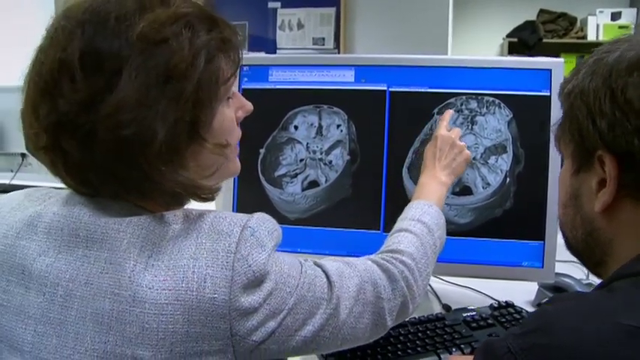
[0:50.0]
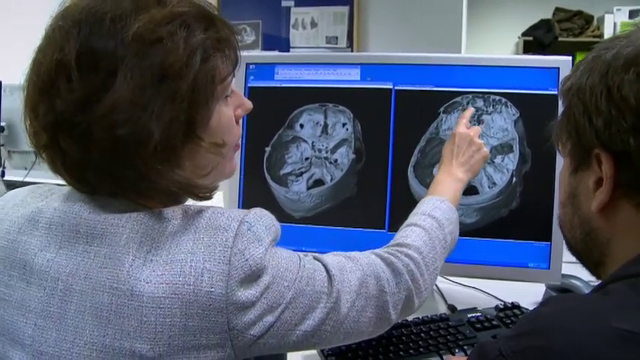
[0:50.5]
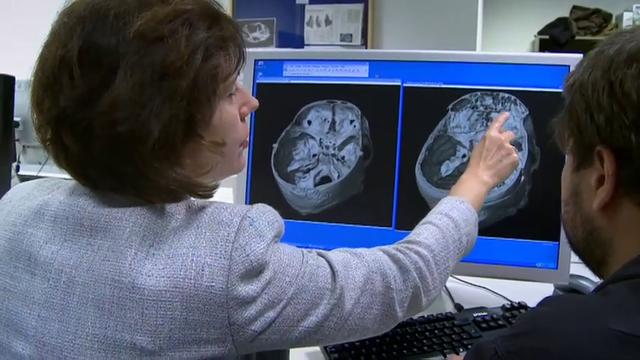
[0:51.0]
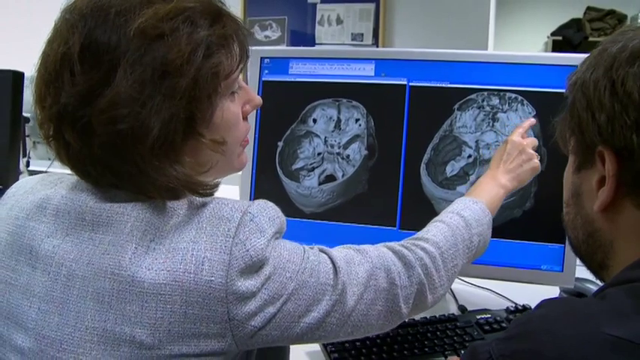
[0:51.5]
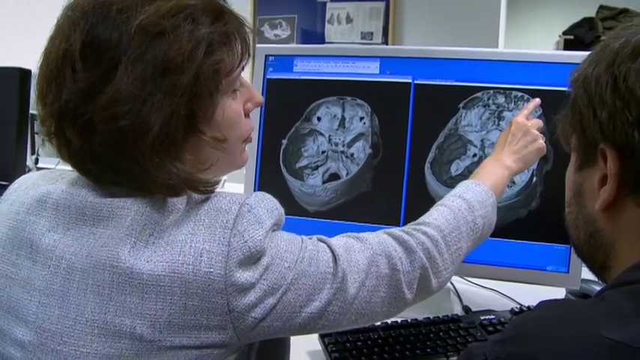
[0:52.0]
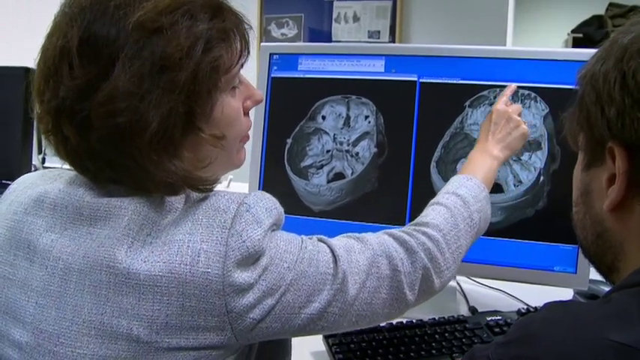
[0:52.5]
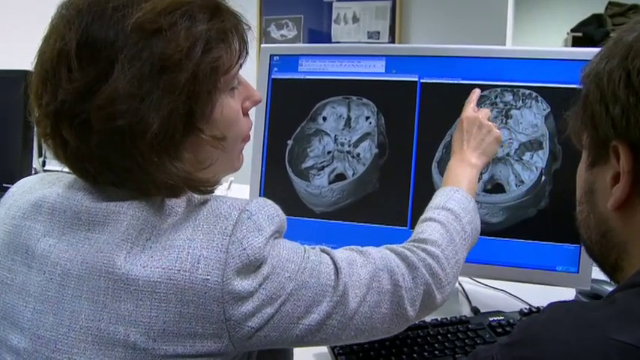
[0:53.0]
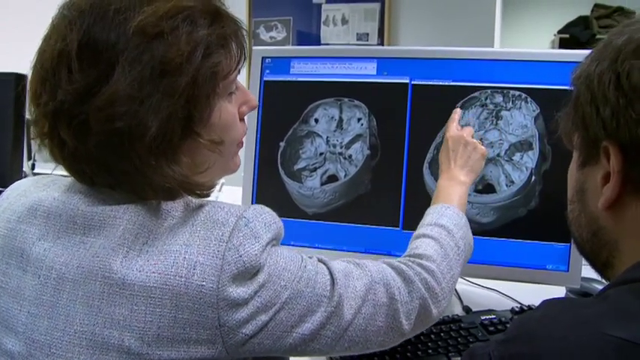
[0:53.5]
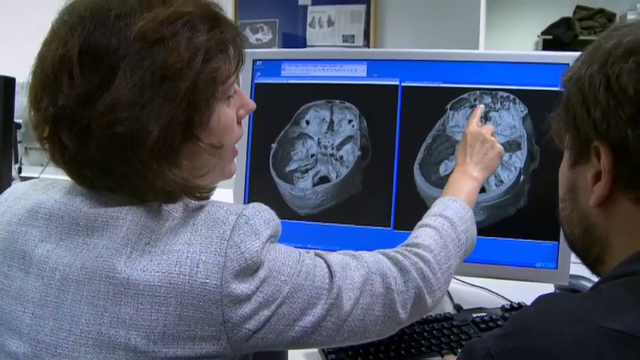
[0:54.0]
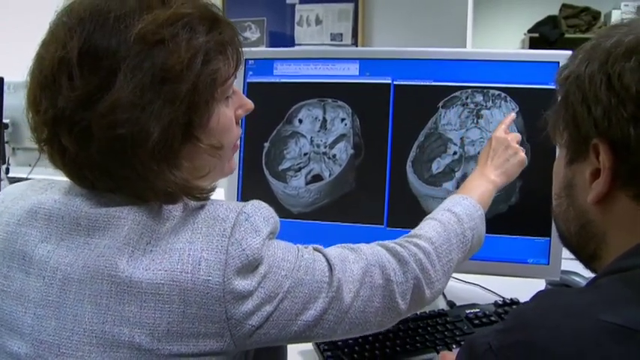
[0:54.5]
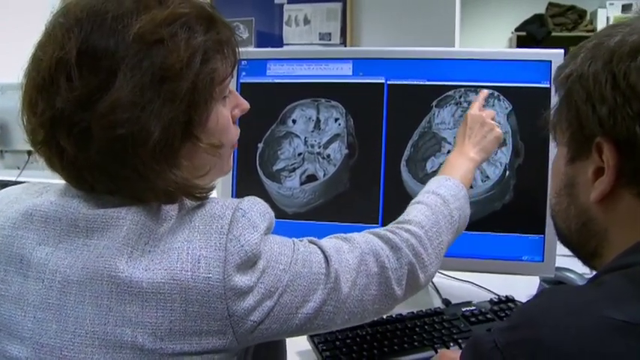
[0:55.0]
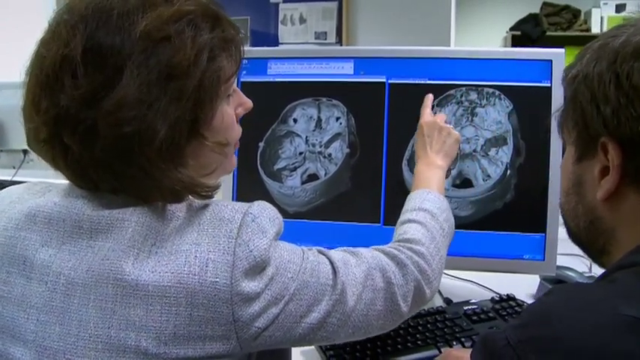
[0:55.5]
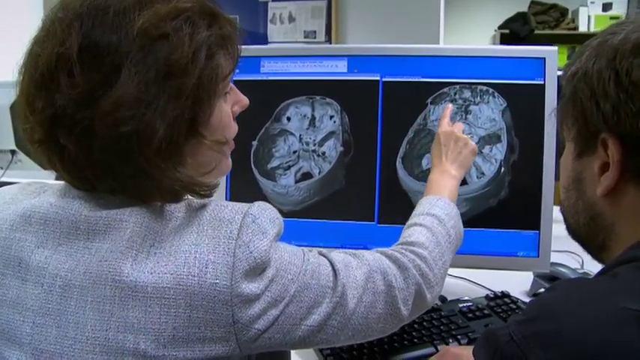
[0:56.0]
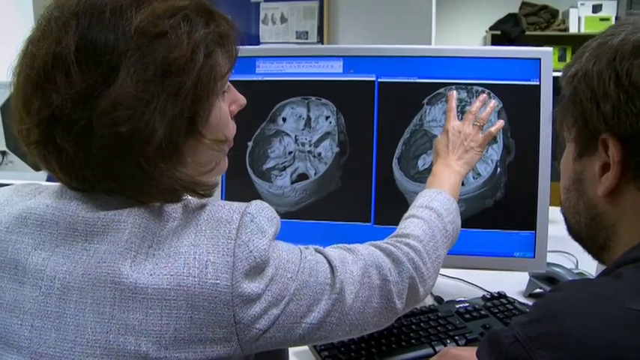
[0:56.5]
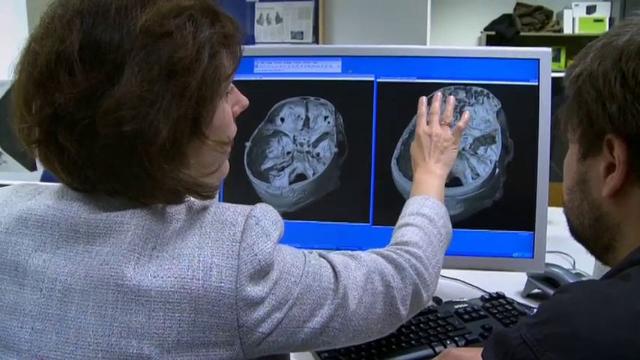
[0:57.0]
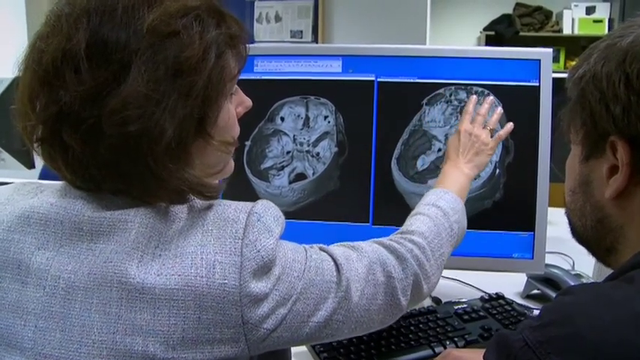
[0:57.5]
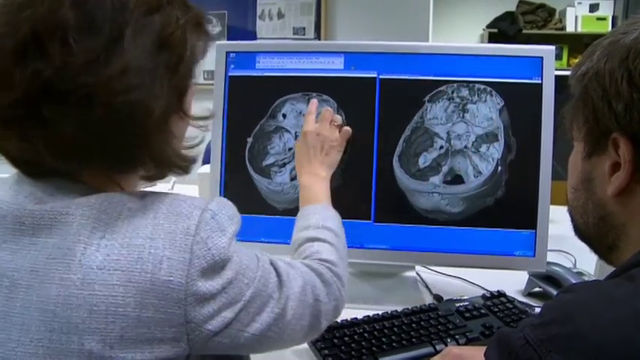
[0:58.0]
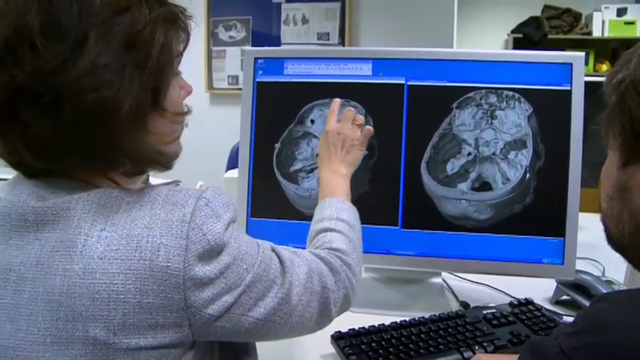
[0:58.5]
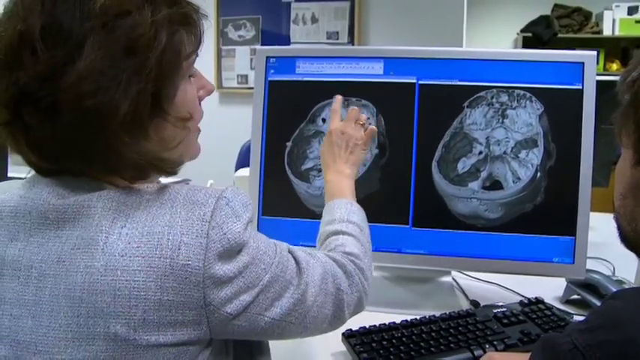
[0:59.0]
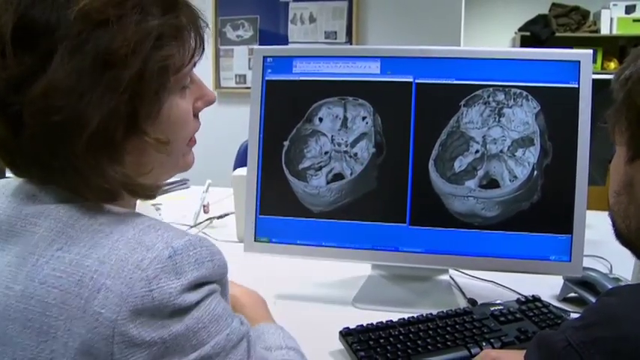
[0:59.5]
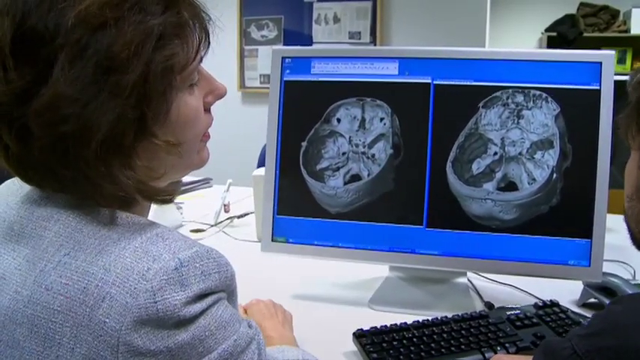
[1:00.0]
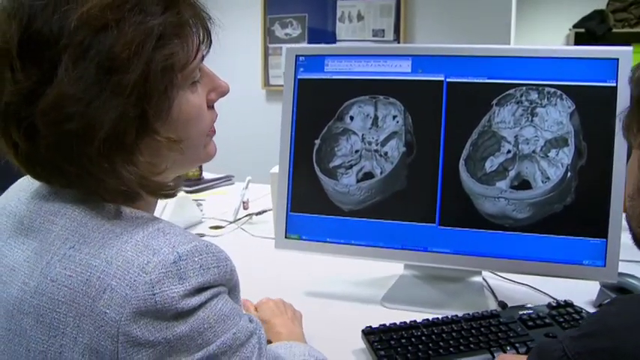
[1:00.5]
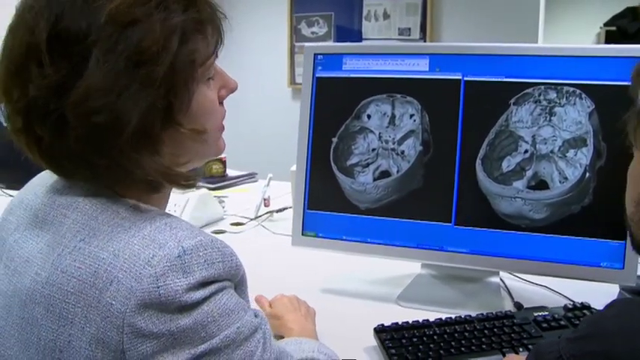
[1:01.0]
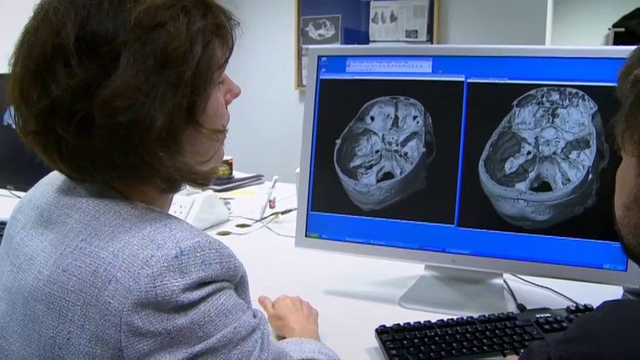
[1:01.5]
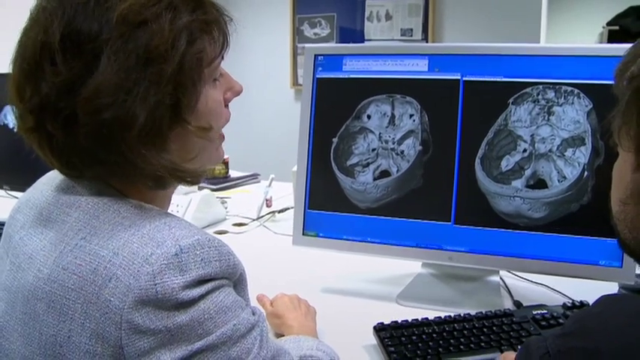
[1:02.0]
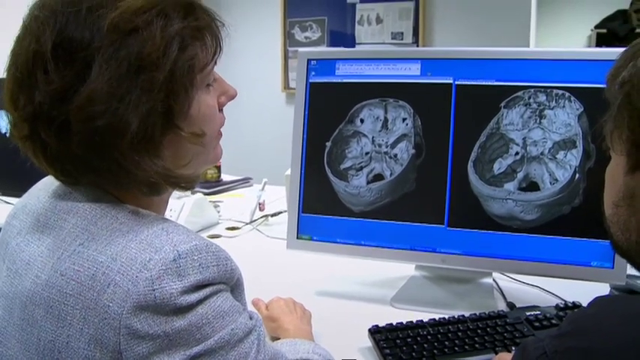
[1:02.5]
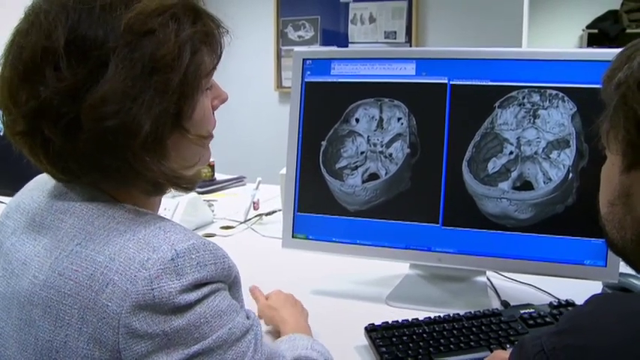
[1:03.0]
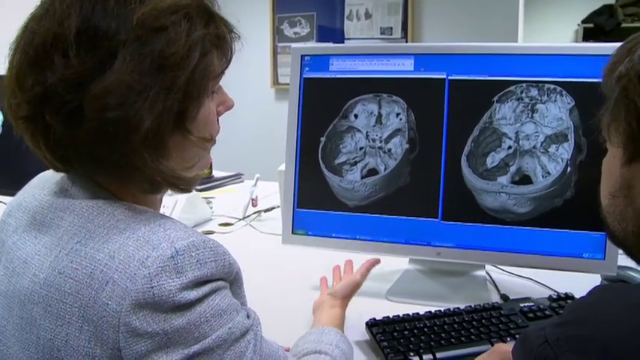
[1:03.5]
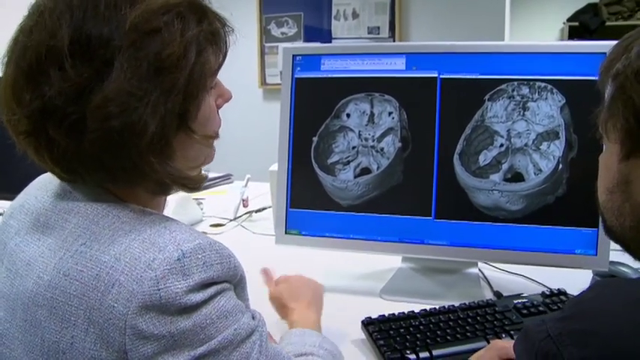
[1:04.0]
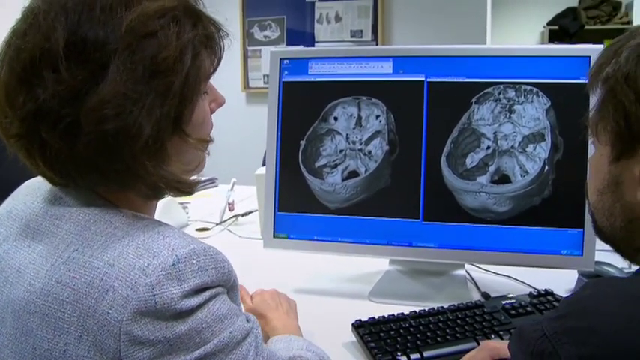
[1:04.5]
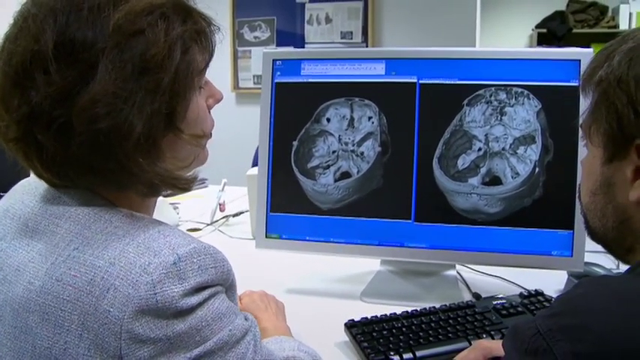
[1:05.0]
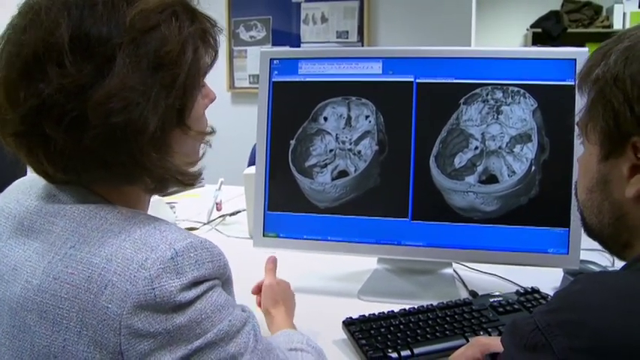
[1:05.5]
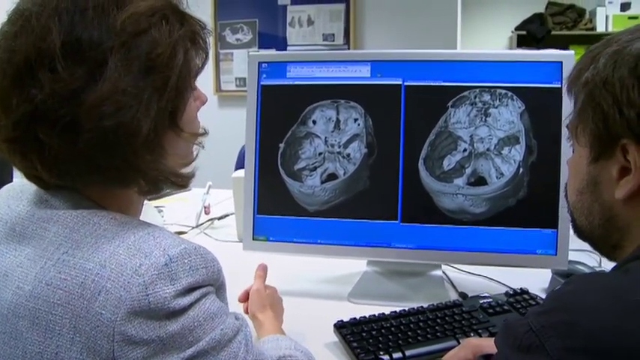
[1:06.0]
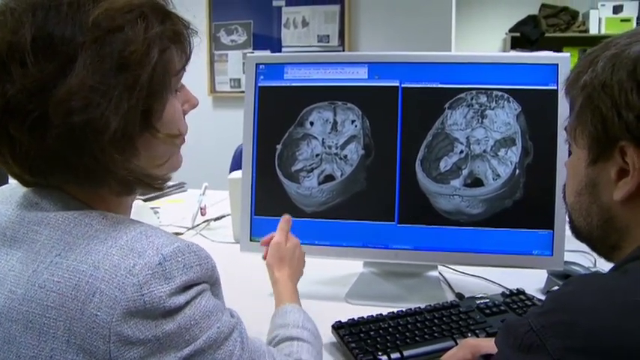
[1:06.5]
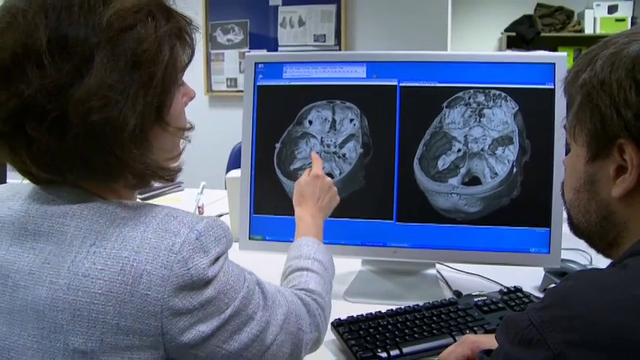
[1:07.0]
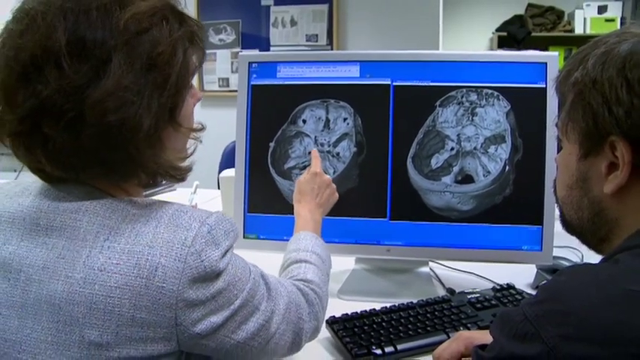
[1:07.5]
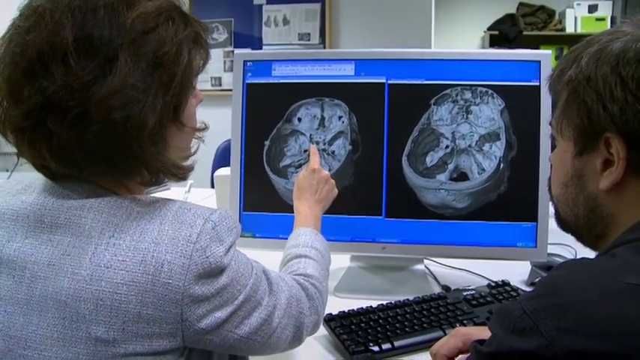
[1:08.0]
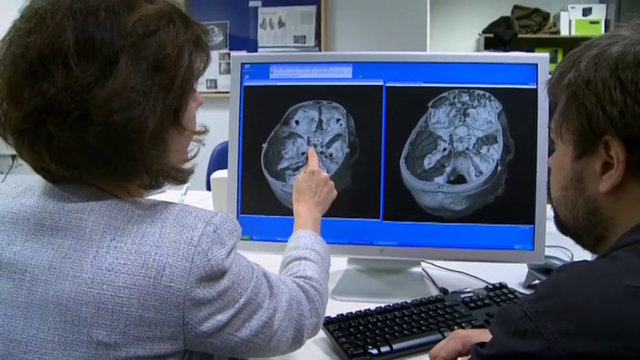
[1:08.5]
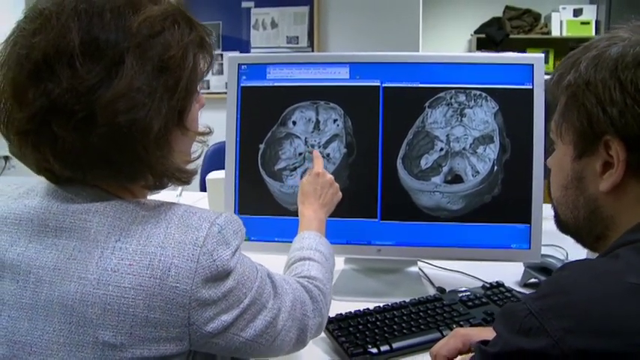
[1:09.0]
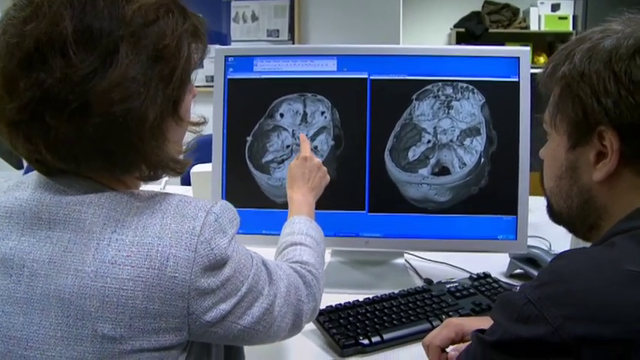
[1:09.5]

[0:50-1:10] The woman uses her pointer finger on the right image on the screen, circling the top part of that image or comparing it with the top part of the image on the left. She is talking as she does this, apparently having found a similarity. She then moves to the middle of the left image and points to its center. All the while, the man stares at the screen, watching as she talks and appears to explain what is going on with the two images. White walls are in the background, with quite a bit of white throughout the scene, and a white outlet with multiple plugs is on the desk for the computers to plug into.